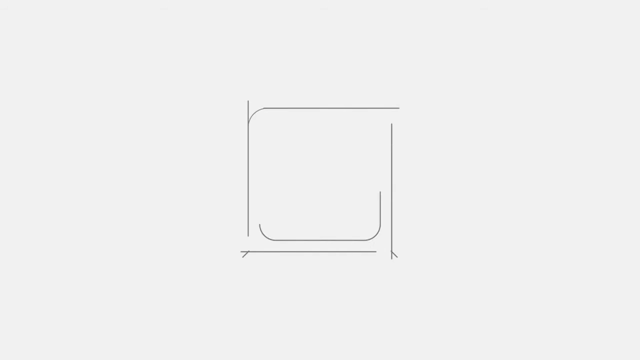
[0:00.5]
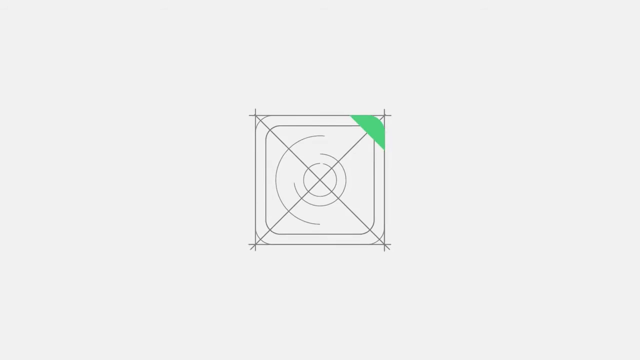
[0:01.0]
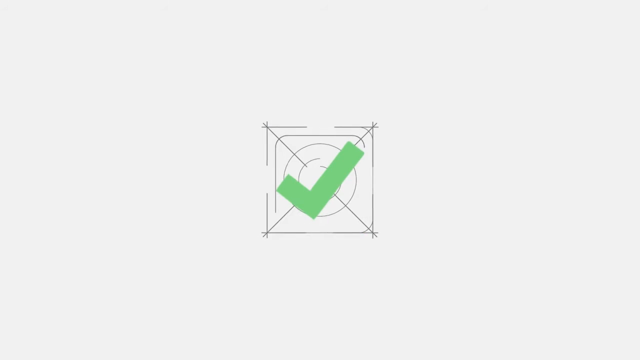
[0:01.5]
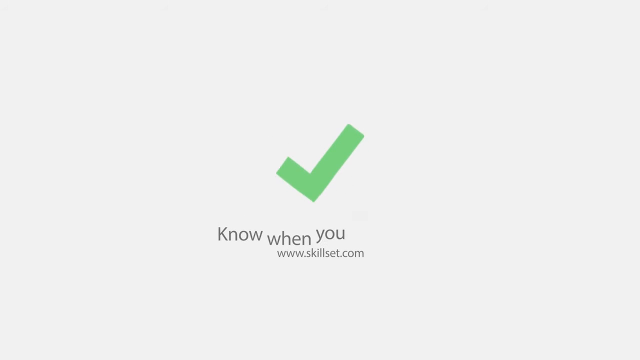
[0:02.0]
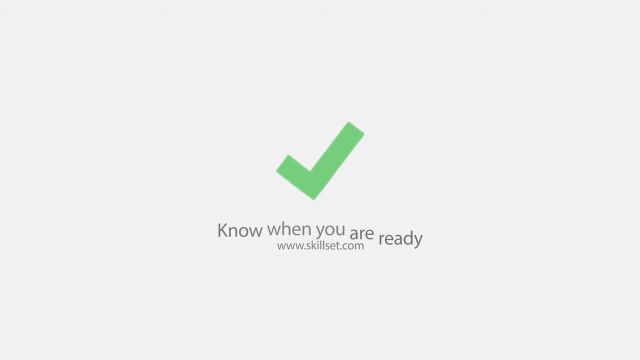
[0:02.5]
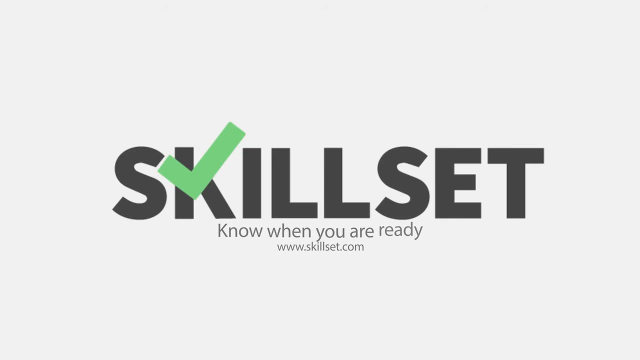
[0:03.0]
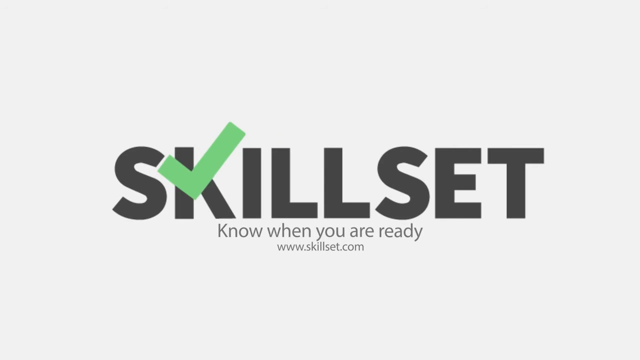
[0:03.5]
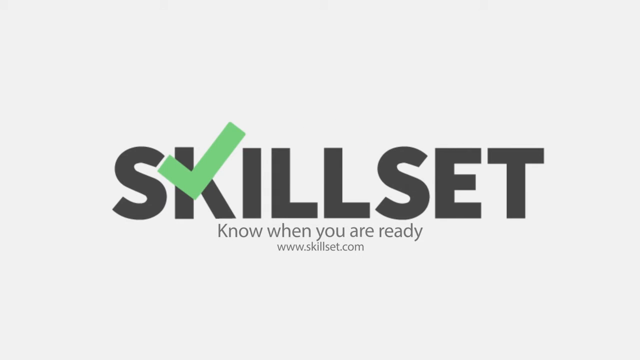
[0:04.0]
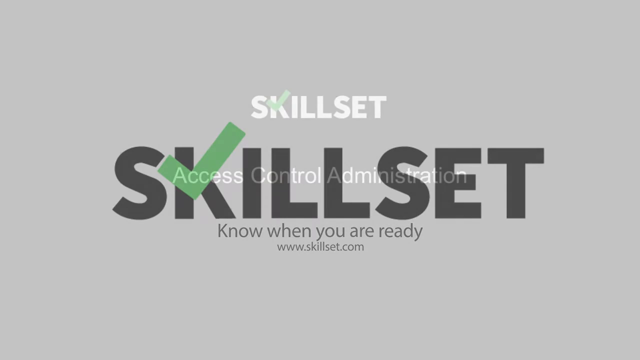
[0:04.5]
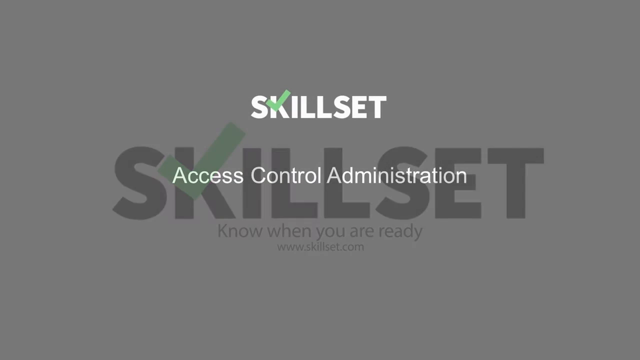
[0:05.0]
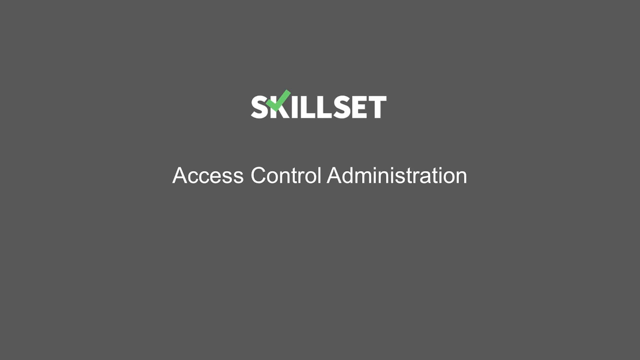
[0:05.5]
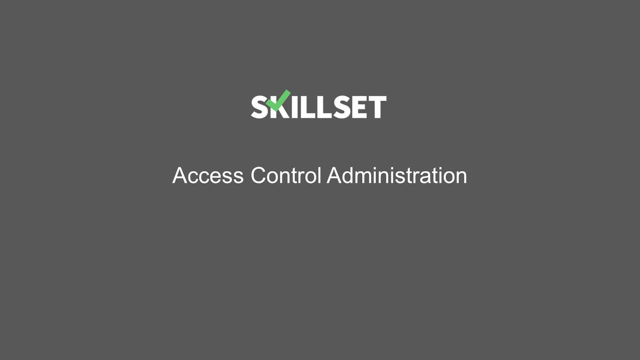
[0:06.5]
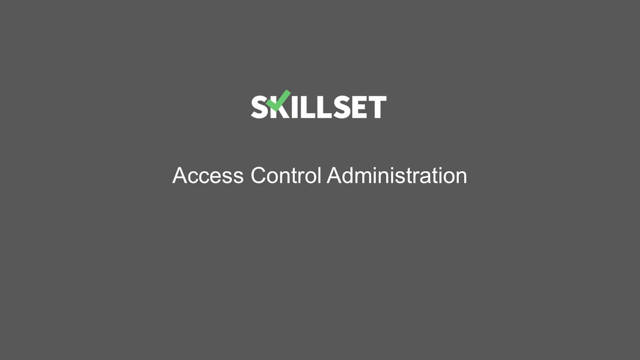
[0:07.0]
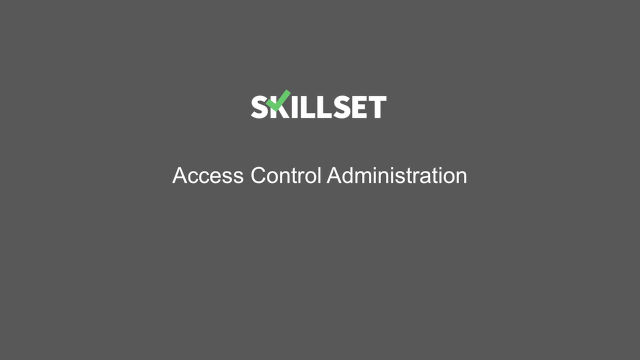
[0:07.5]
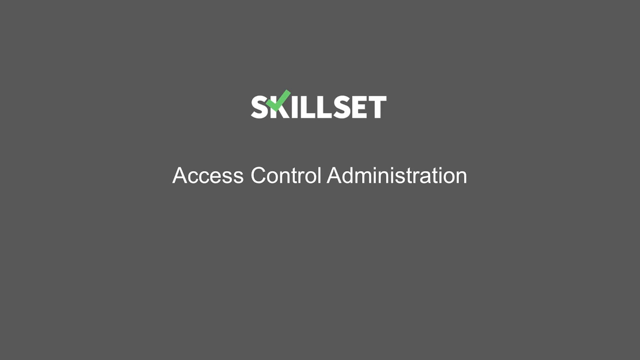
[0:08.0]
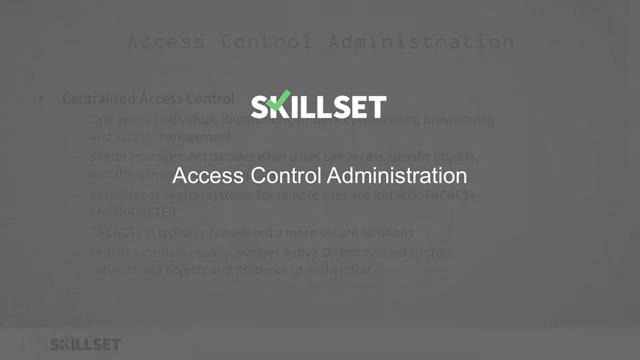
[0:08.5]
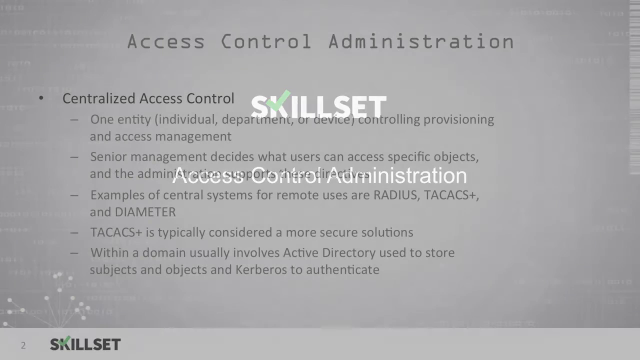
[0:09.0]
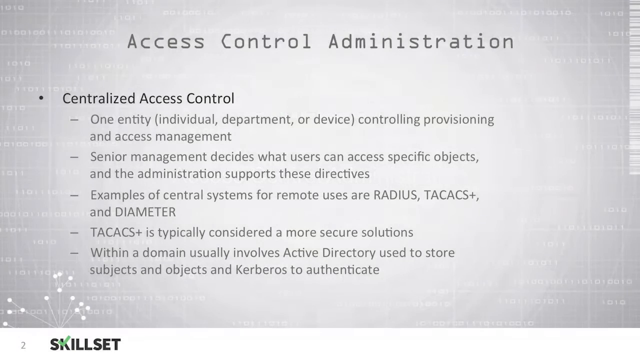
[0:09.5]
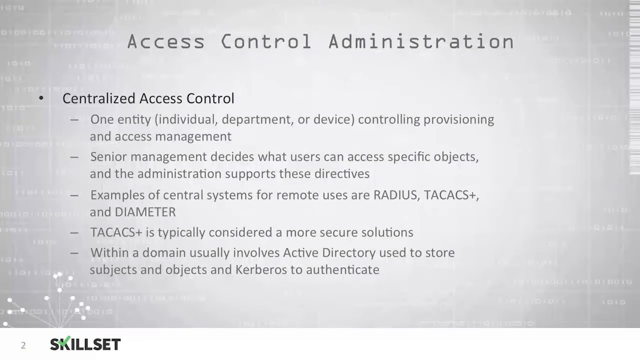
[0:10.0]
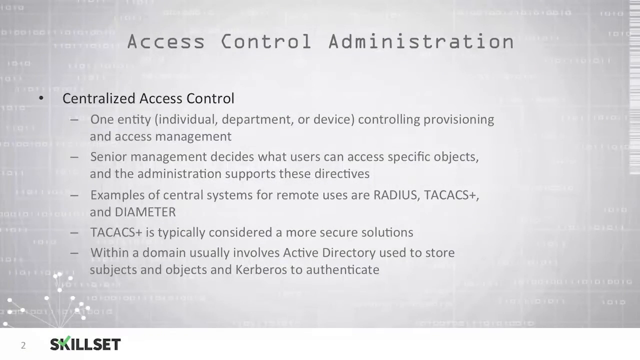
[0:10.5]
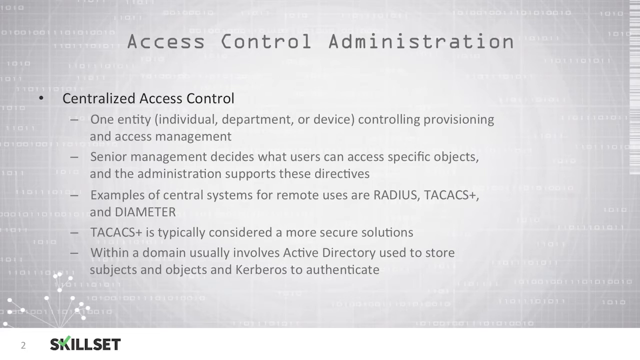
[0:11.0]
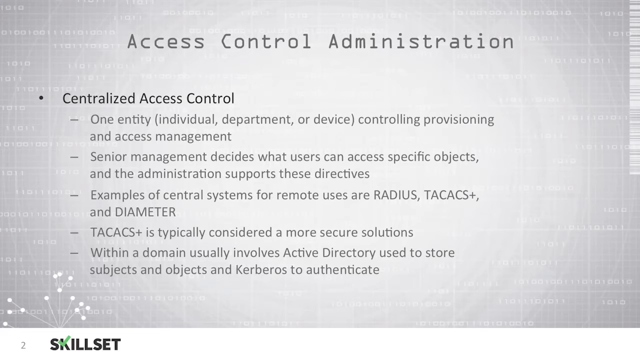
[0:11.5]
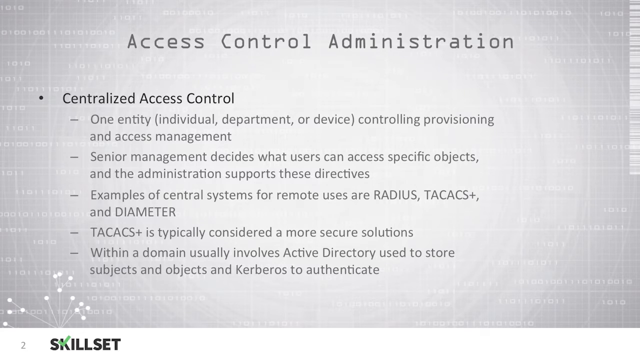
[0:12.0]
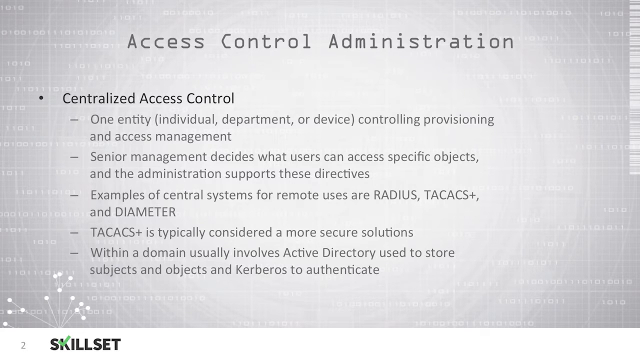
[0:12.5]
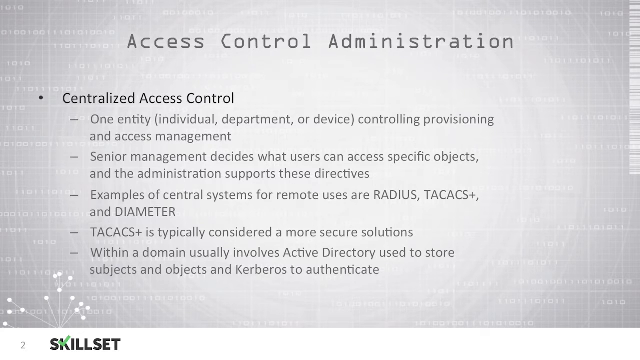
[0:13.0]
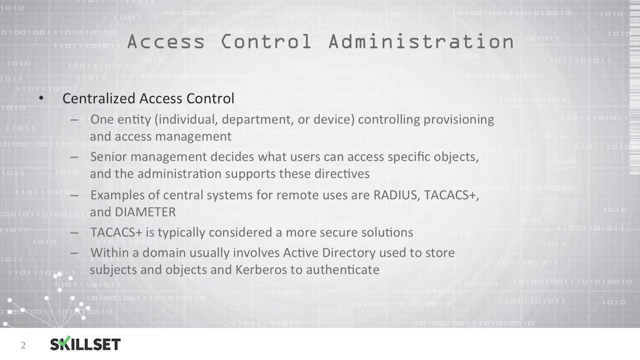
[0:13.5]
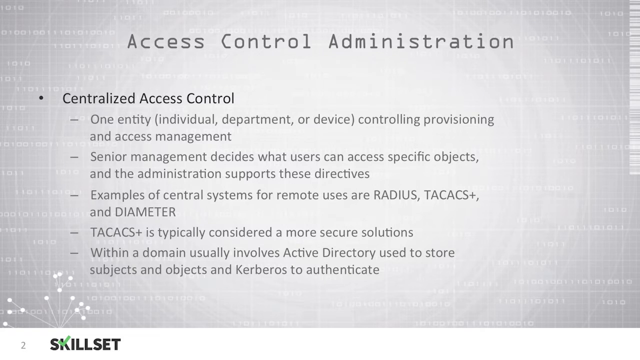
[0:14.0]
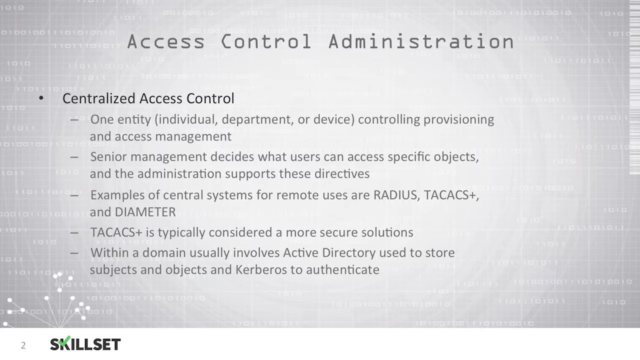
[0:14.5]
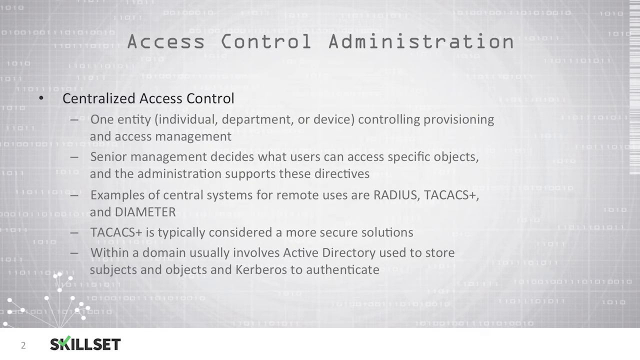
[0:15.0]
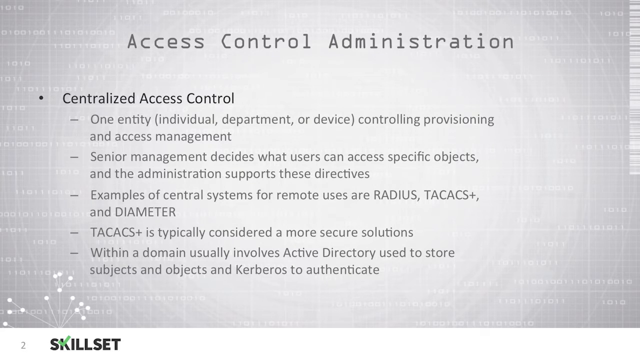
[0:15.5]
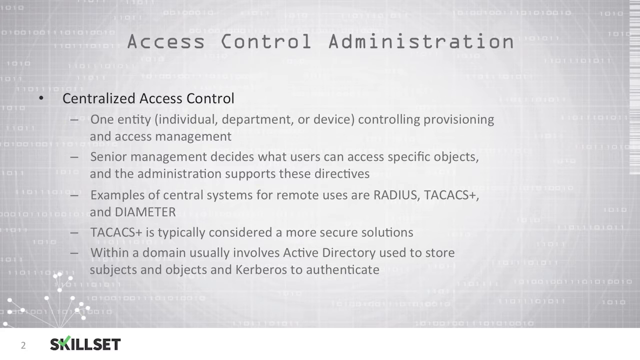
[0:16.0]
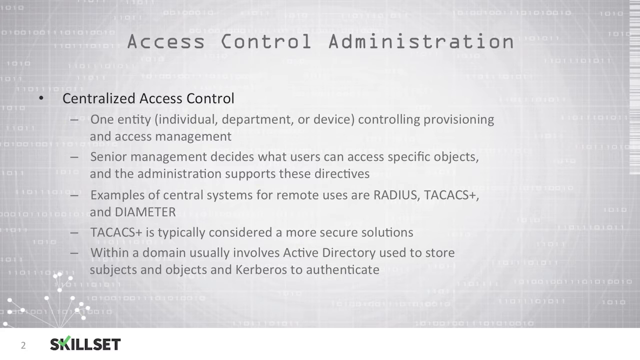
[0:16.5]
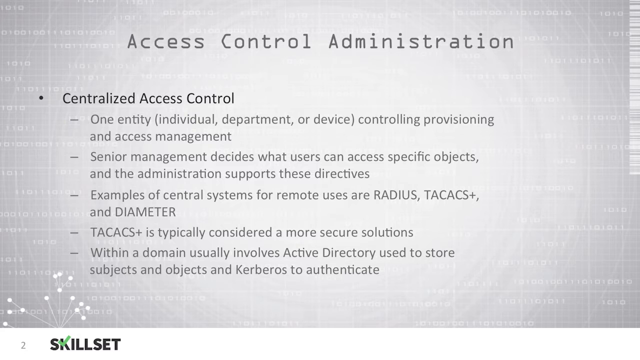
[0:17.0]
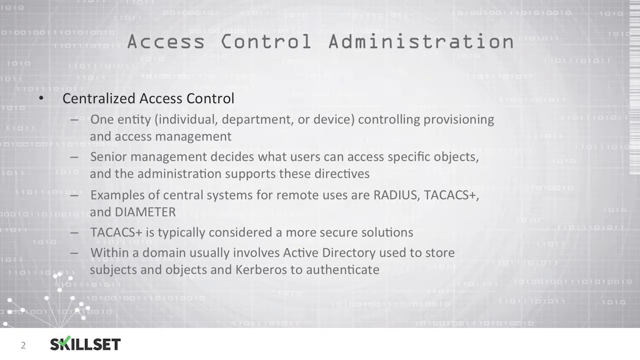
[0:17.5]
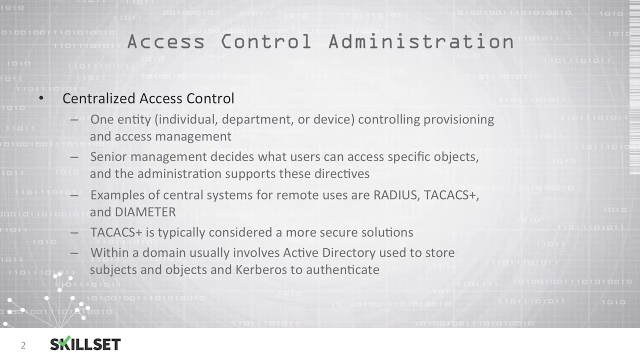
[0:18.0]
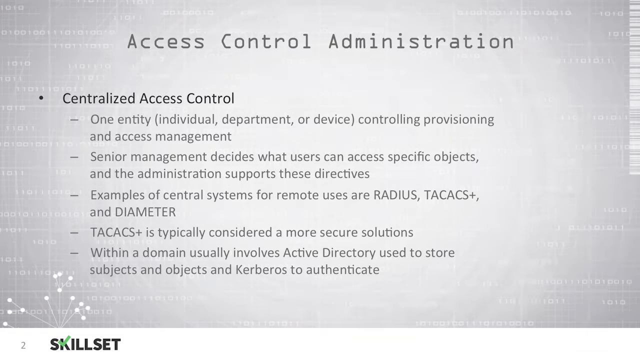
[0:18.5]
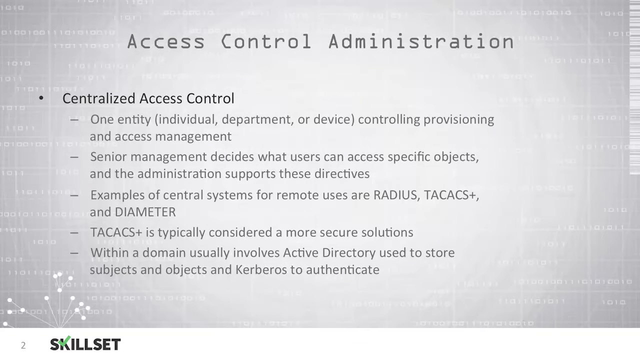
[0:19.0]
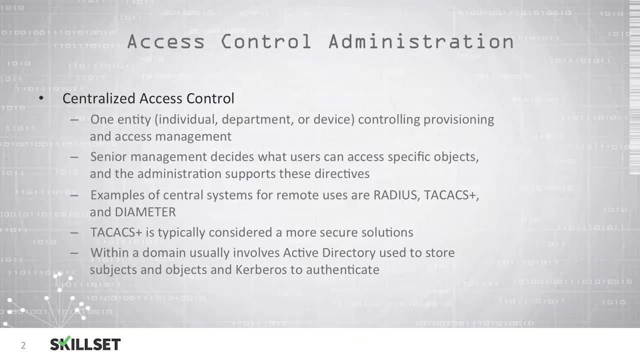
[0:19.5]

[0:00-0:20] The video opens with a small transition animation that leads into a title sequence ending on the title "Skillset" in black, bold lettering that fills a good part of the screen against a white background. The letter K in "Skillset" is slightly marked by a green check that also forms part of the lettering of the K. Below the title, in smaller font, it says "know when you are ready", and in even smaller text below that is "www.skillset.com". The video then moves to its first part, with "Access Control Administration" as the title, followed by the first topic, "Centralized Access Control", and several bullet points below. The bullets read: "one entity (individual, department, or device) controlling, provisioning, and access management"; "senior management decides what users can access specific objects, and the administration supports these directives"; "examples of central systems for remote users are Radius, TACACS+, and Diameter", with those three terms capitalized; "TACACS+ is typically considered a more secure of solutions", with TACACS+ in all caps; and "within a domain usually involves Active Directory used to store subjects and objects, and Kerberos to authenticate". The slide has a sort of white gradient background with a slight pattern of ones and zeros.